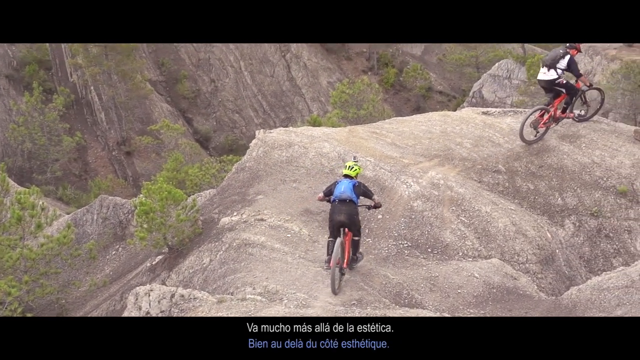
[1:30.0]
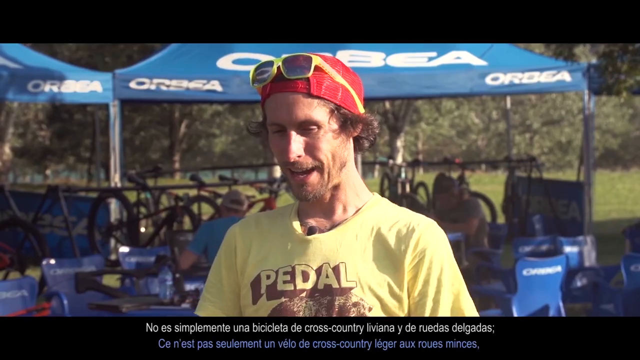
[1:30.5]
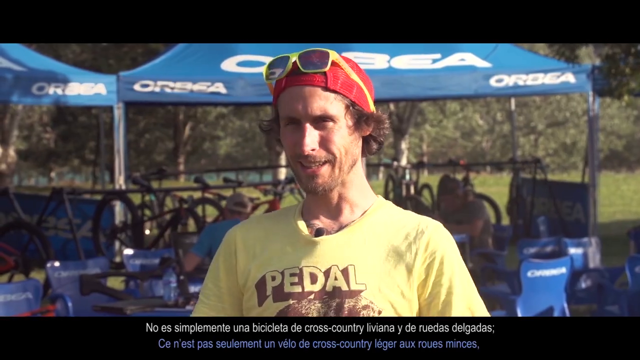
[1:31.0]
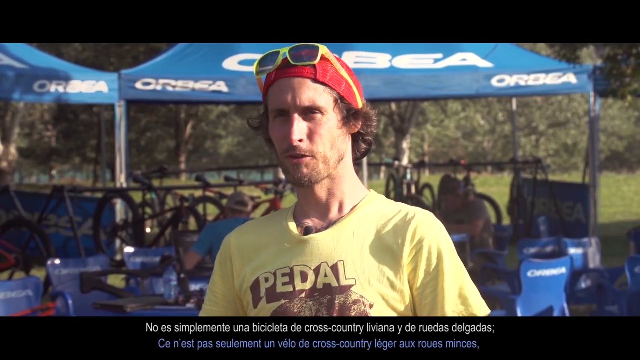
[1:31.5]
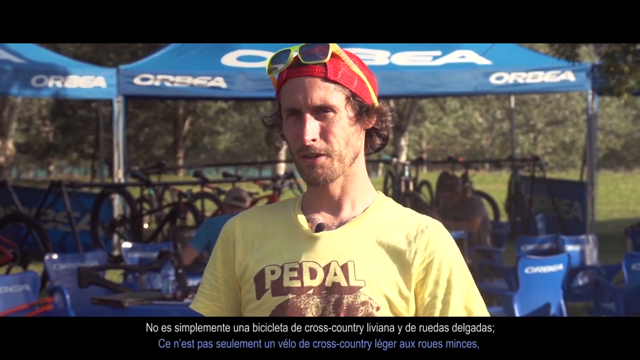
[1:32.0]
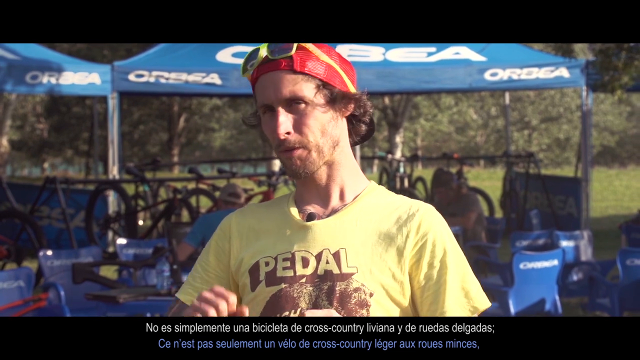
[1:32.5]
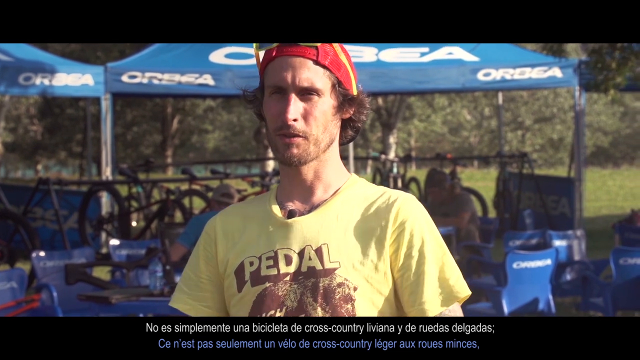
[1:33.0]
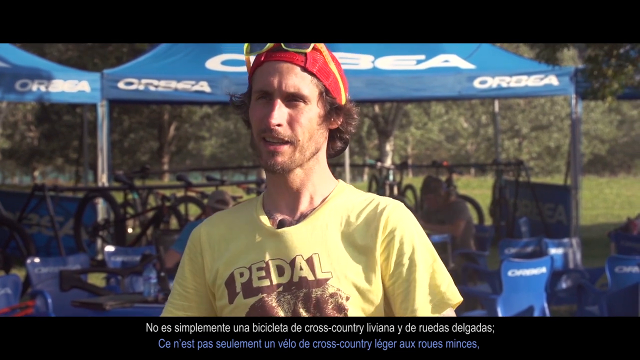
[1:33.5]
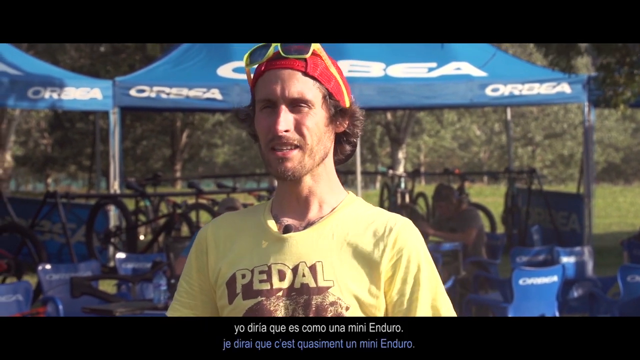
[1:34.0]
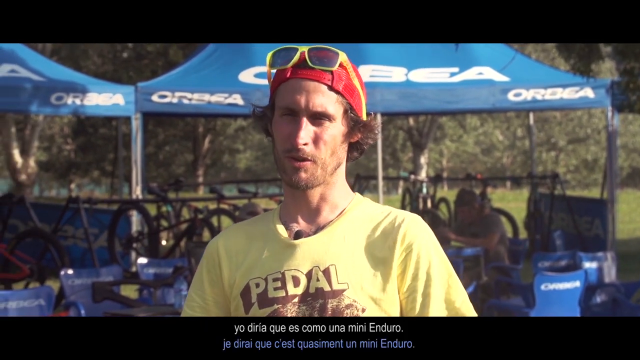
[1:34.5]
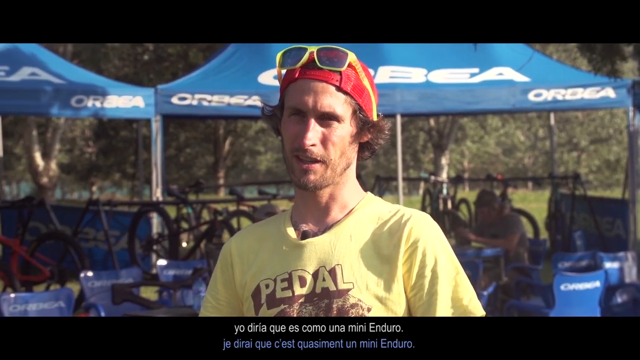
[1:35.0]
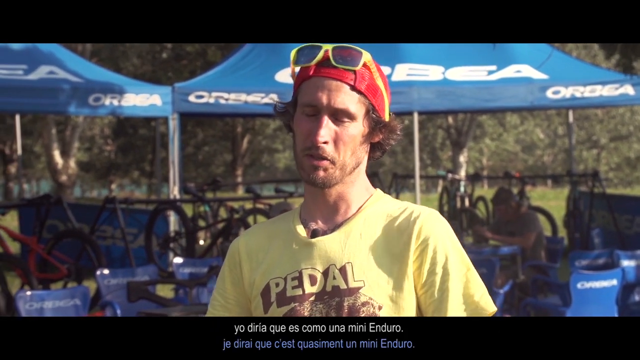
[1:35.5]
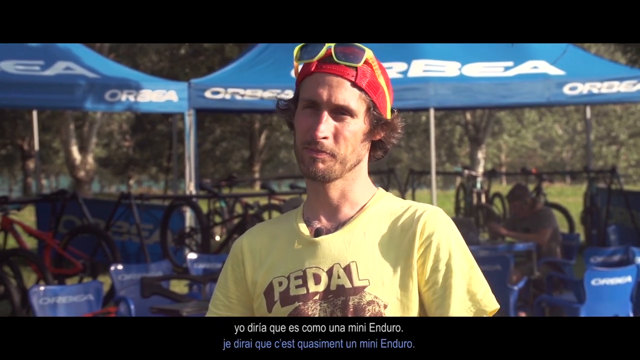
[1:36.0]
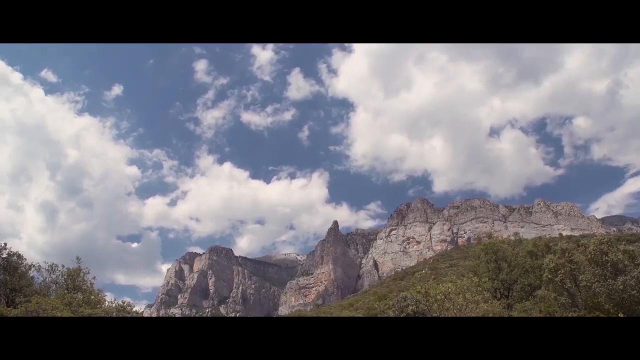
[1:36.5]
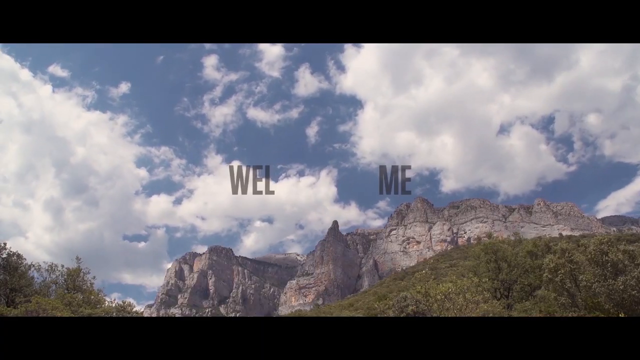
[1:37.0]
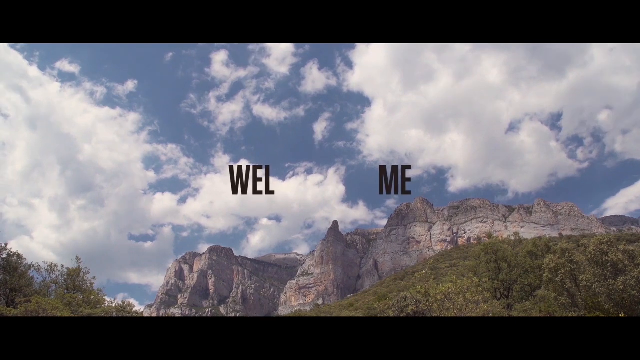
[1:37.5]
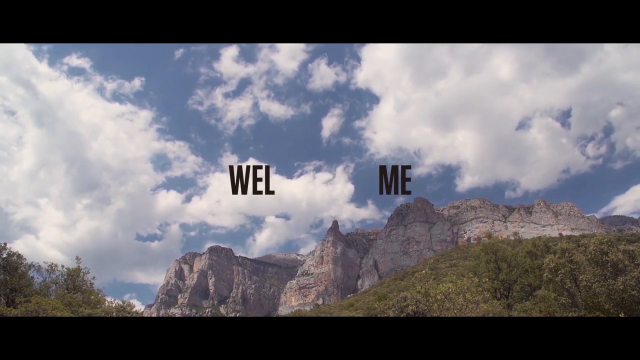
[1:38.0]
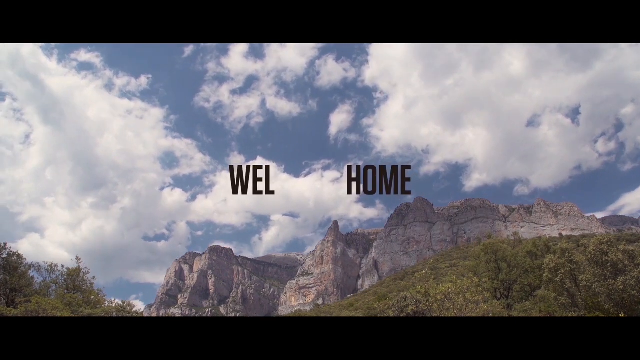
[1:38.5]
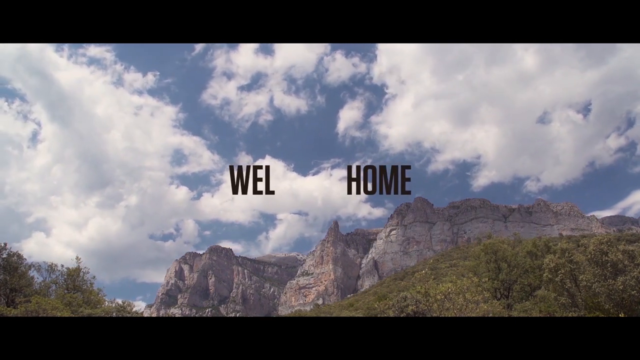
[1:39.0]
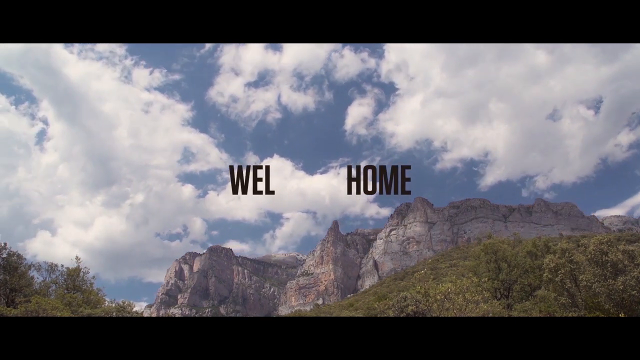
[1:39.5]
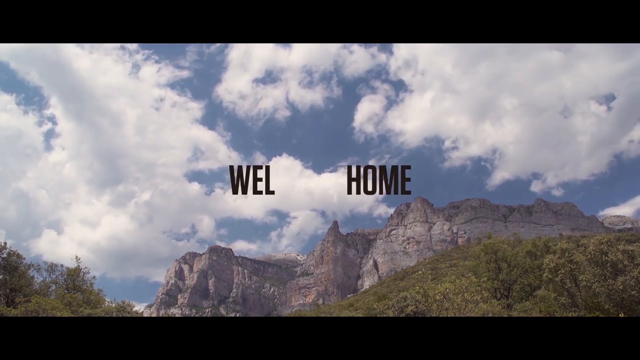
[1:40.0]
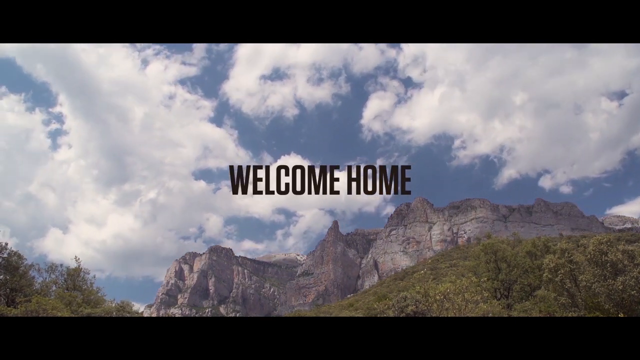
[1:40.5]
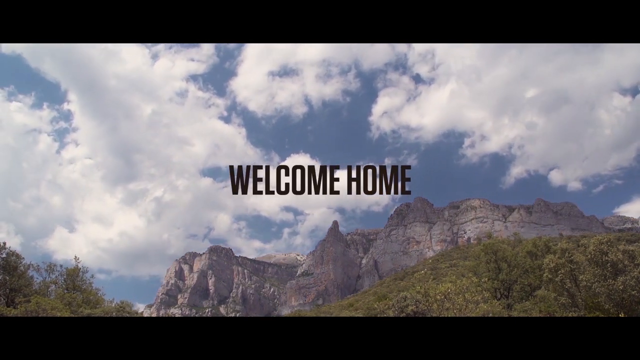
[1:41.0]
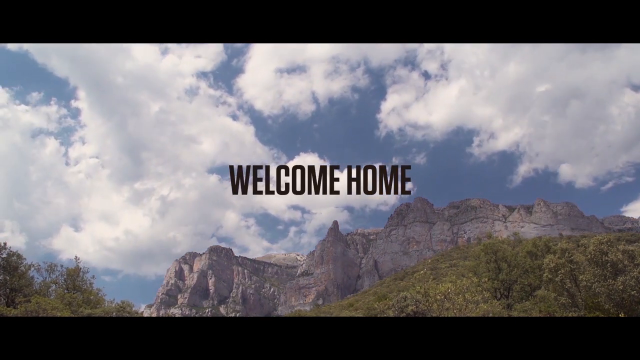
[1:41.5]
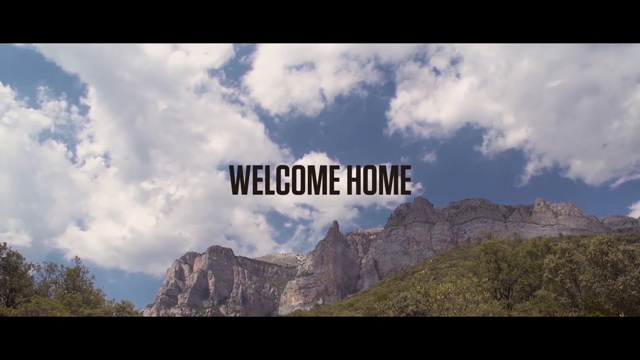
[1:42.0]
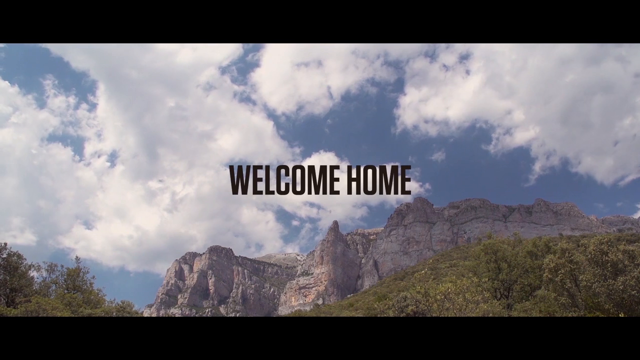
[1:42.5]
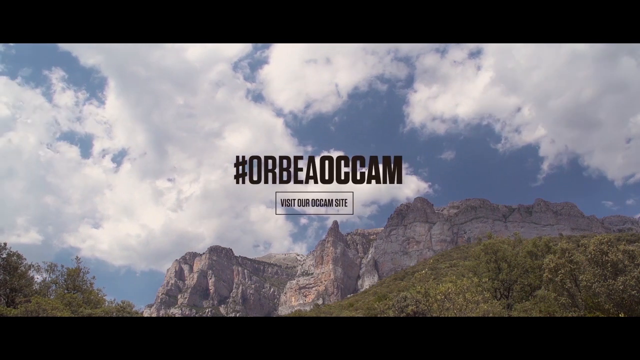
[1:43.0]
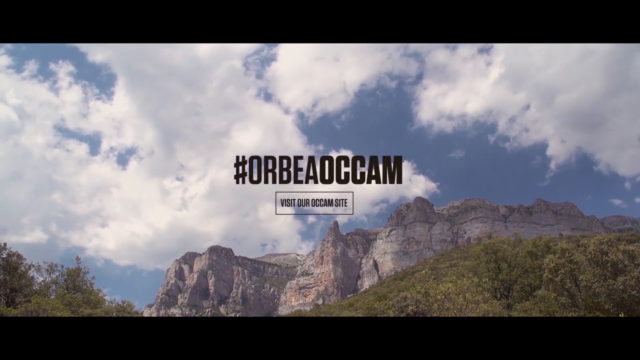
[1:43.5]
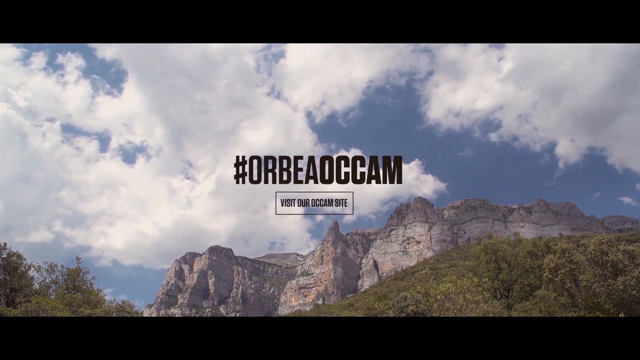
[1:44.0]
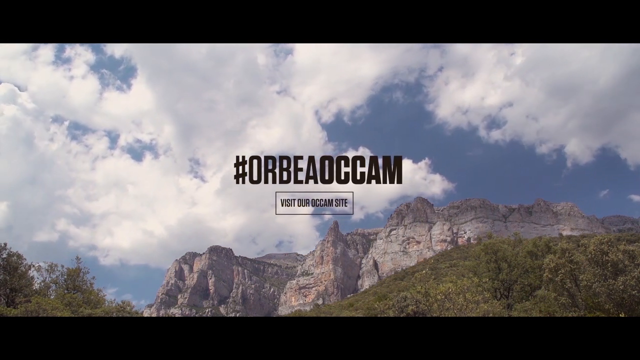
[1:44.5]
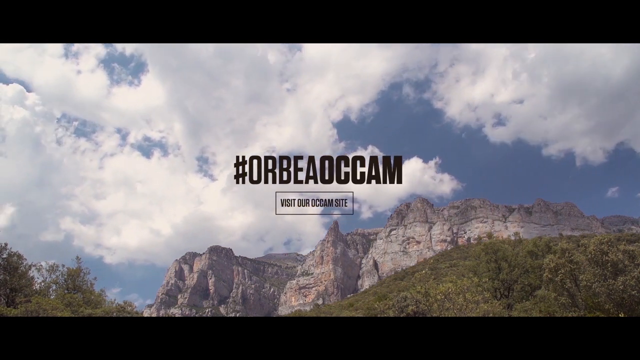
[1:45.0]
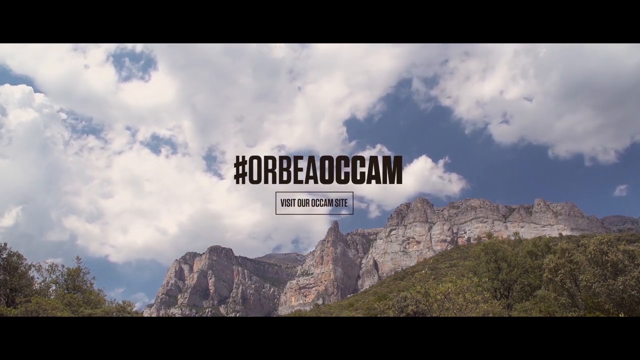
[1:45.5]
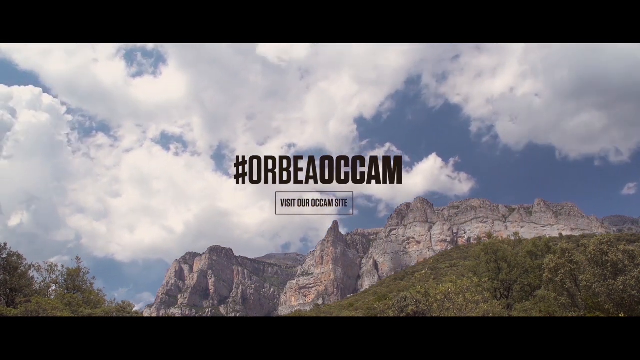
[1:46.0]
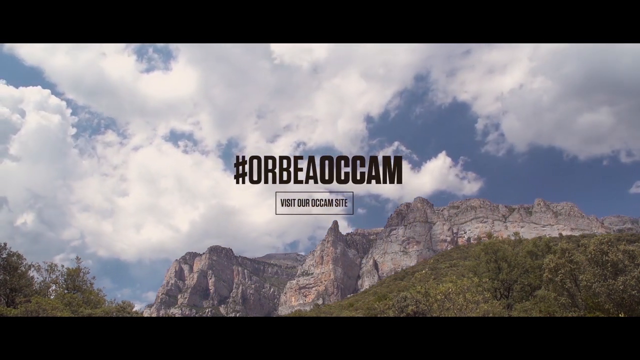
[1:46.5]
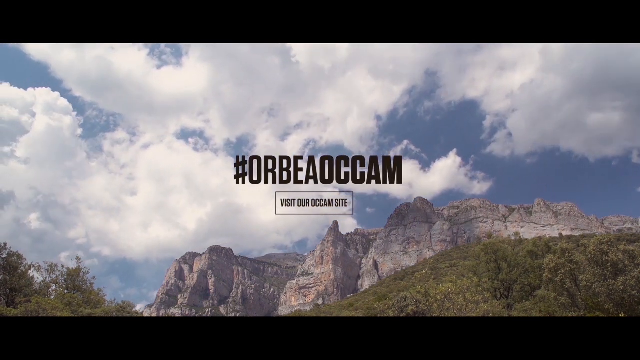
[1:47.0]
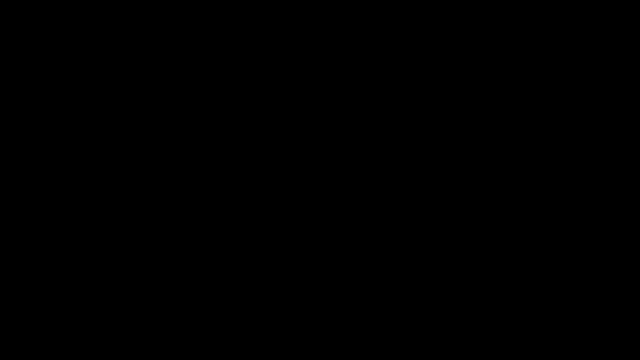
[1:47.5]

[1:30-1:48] People ride along a small ridgeline, with two people in the shot. The man in the yellow shirt and red hat, wearing yellow sunglasses, appears again with "Orbea" in the background and sentences in a foreign language at the bottom of the screen; he is somewhat animated as he talks. The video then goes to the mountain shot with clouds, where the text reads "welcome", then "welcome home", followed by "#orbea OCCAM" and "Visit our OCCAM site". This stays up for a moment with clouds moving in the background before the video transitions to a black screen and ends. There are areas of pine trees in certain places, and the trails look heavily ridden, with very loose terrain.